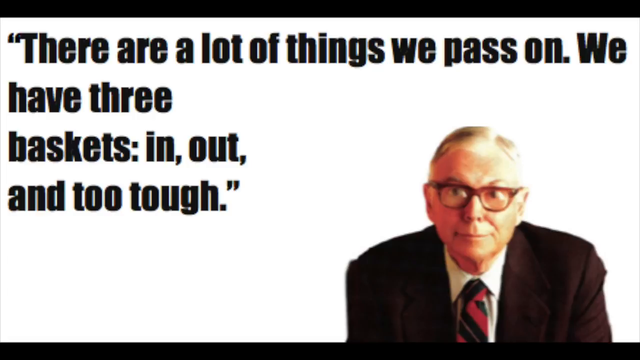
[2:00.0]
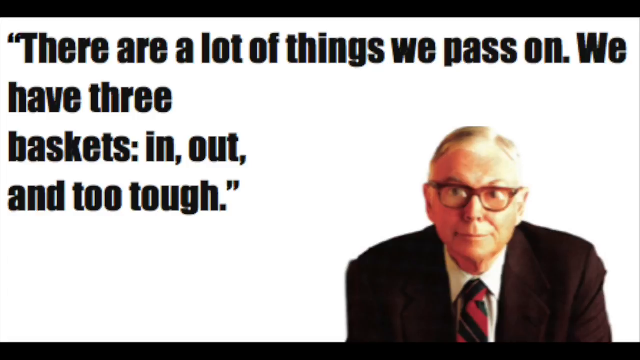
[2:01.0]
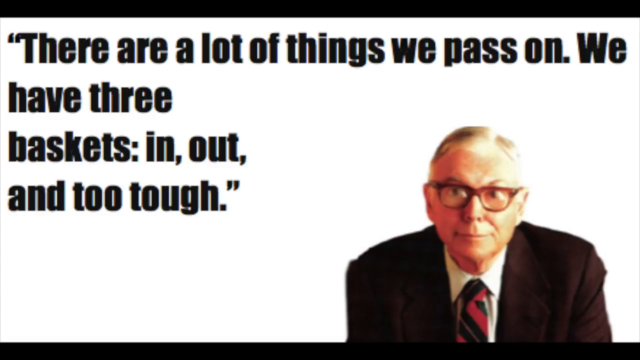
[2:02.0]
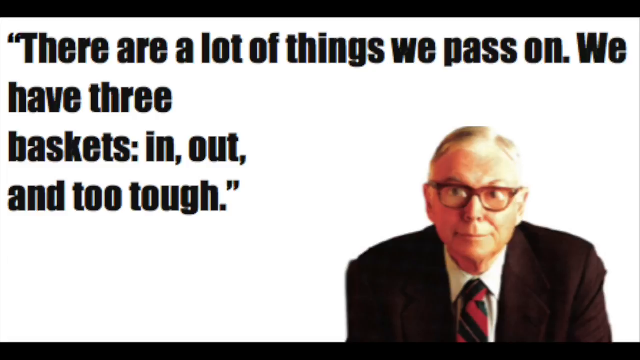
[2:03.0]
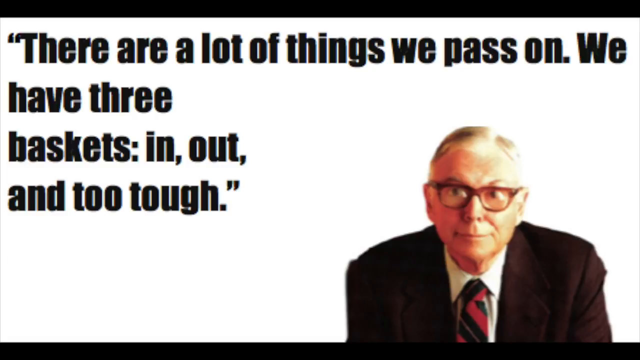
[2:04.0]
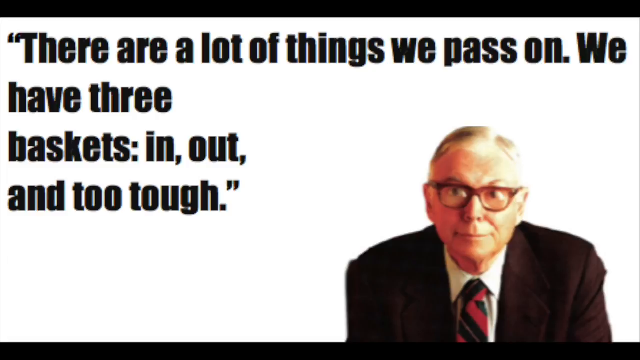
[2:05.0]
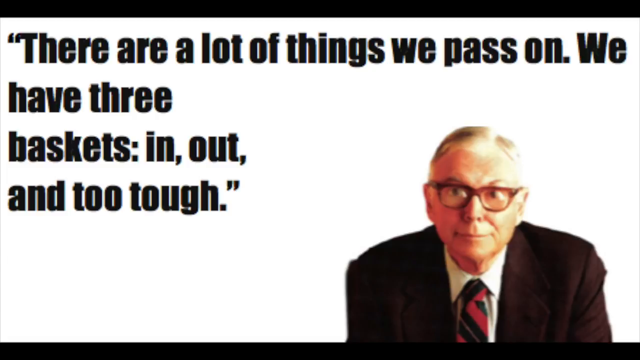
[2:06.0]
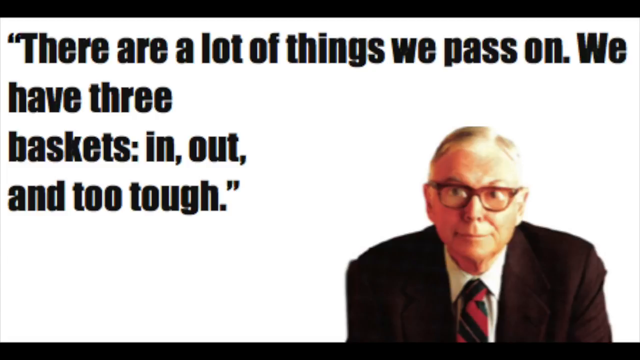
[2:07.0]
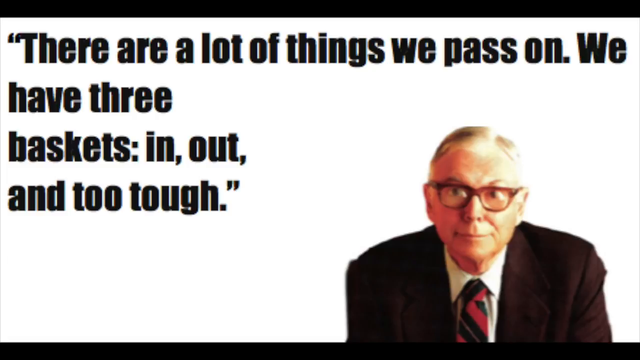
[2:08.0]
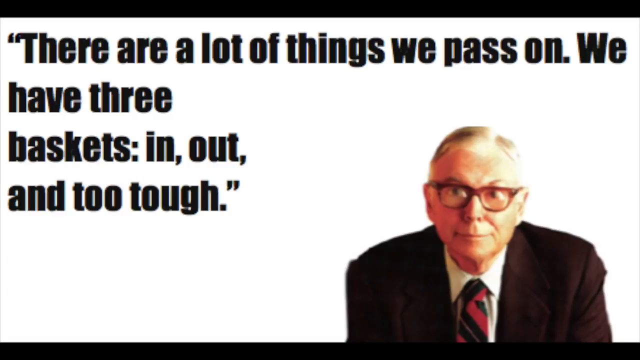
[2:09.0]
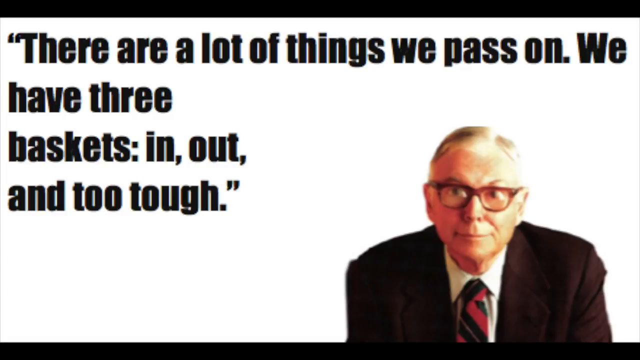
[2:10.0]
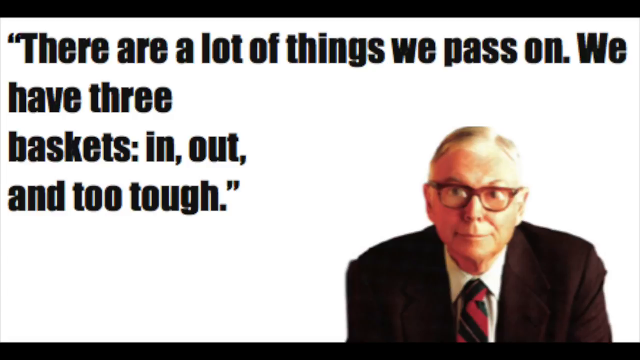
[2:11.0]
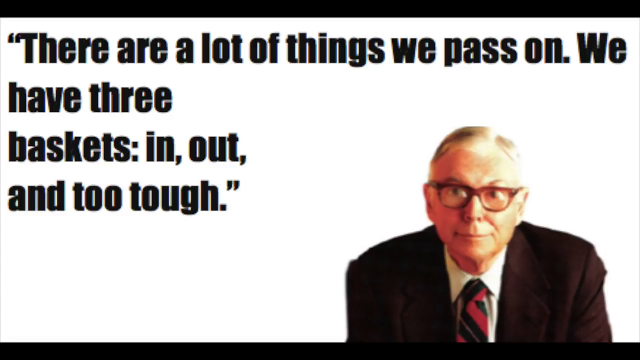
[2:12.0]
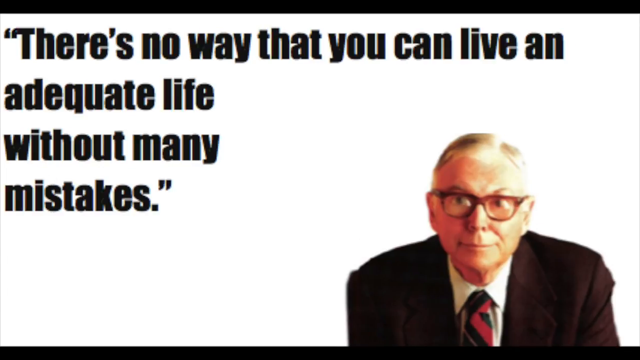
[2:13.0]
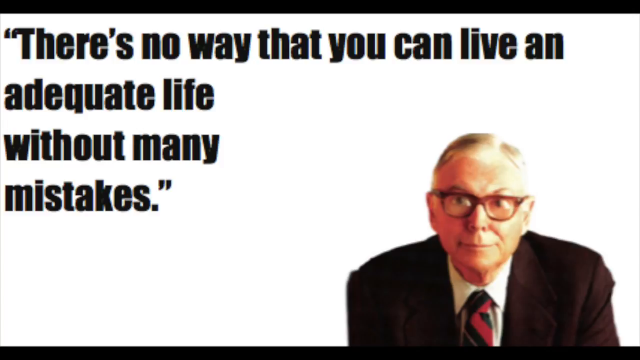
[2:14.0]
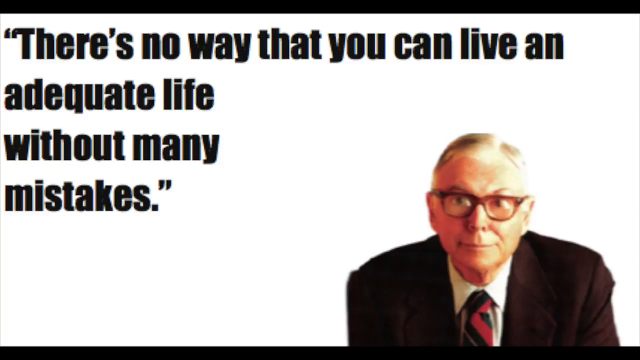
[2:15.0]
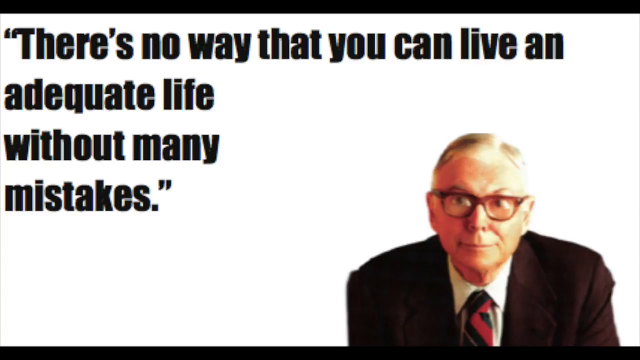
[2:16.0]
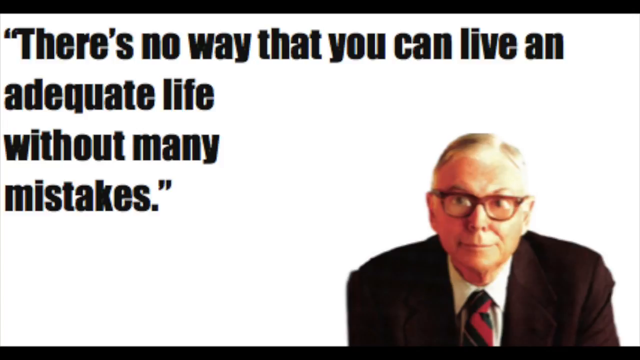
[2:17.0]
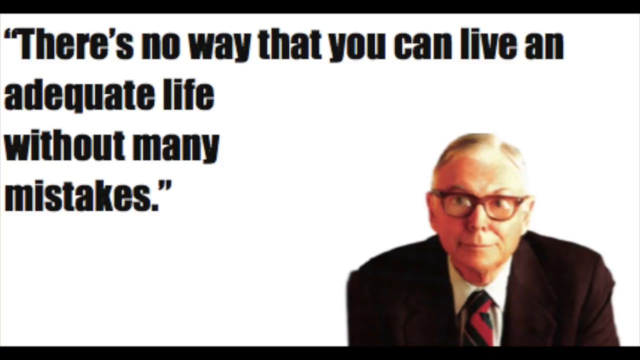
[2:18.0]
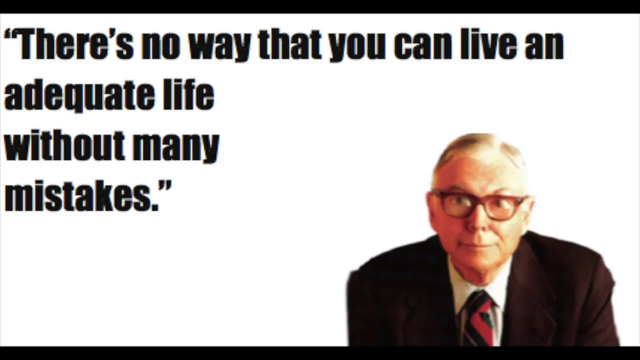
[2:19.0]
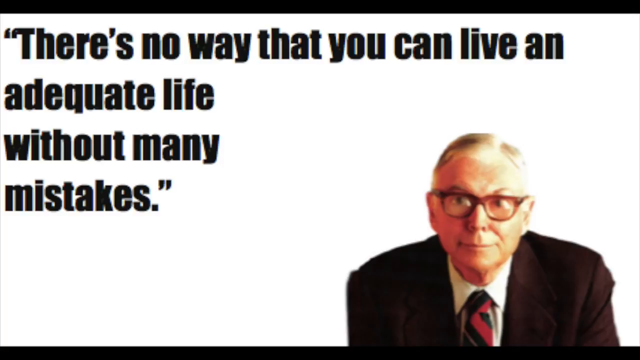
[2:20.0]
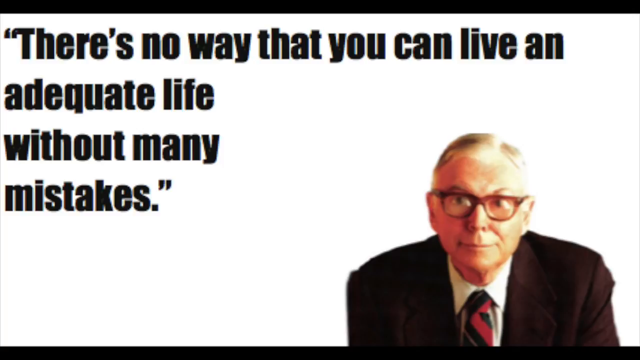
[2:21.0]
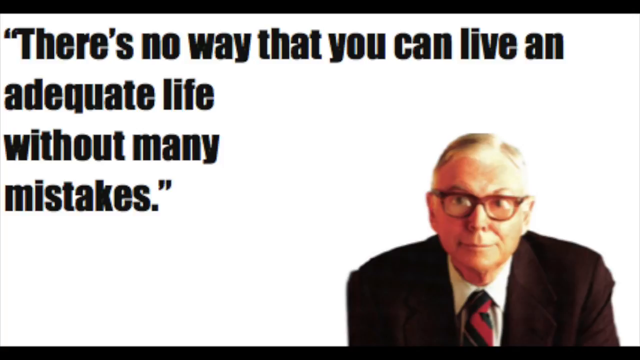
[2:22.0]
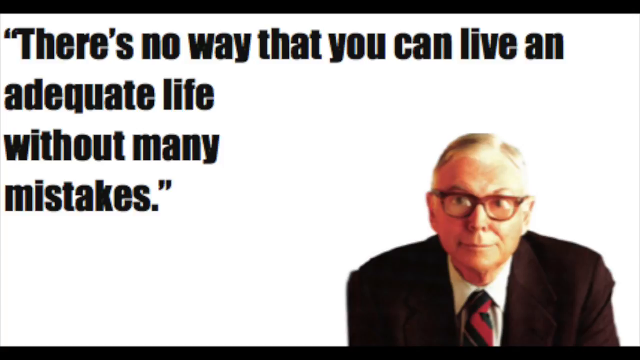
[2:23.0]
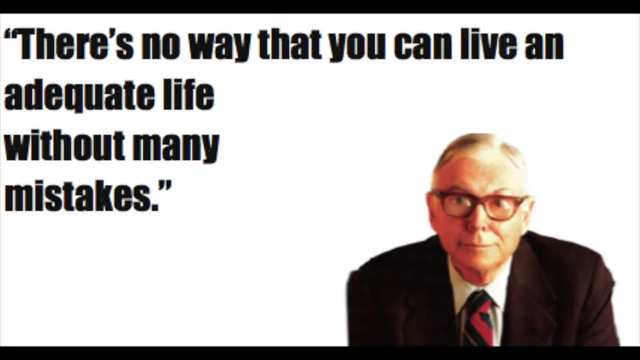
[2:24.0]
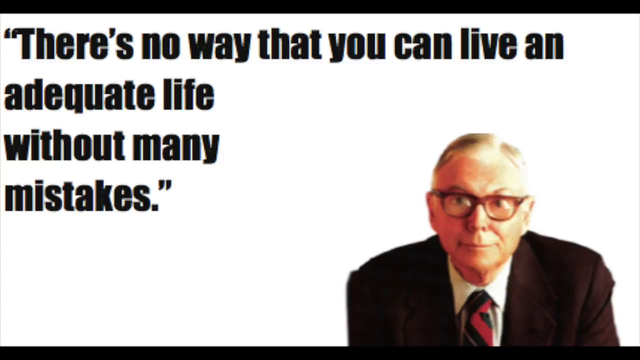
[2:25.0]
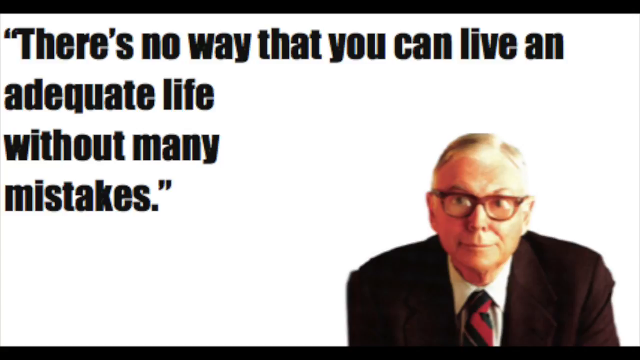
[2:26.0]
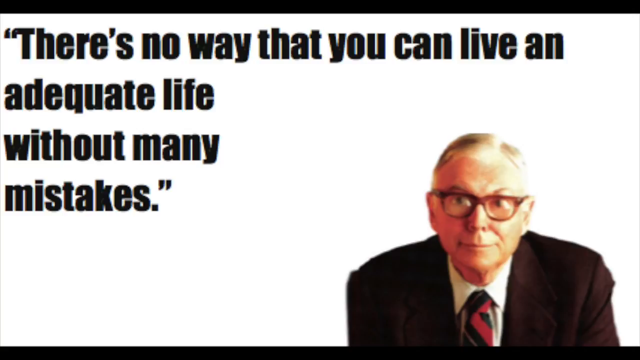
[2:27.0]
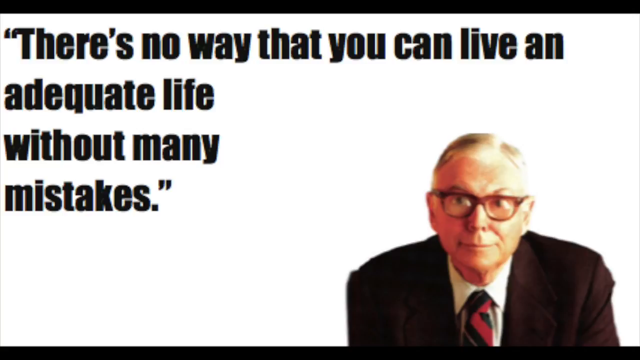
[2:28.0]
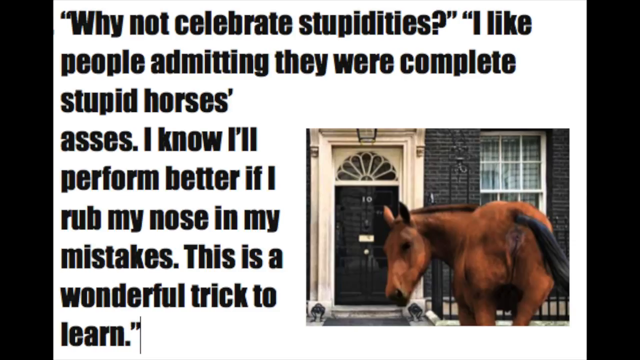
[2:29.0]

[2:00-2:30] A large image of a condescending older man sitting on the right side of the screen looks directly at the camera. He has gray hair to the right and a very condescending expression, and wears plastic-framed glasses with a pinkish tint, a jacket that seems to be reddish brown, a white shirt and a black and red tie. Most of the background is almost greenish white, with a message in quotation marks at the top: "there are a lot of things we pass on. We have three baskets in, baskets out, and the basket for items that are too tough to deal with." The screen then changes, and another message appears for just a brief second before it is gone.